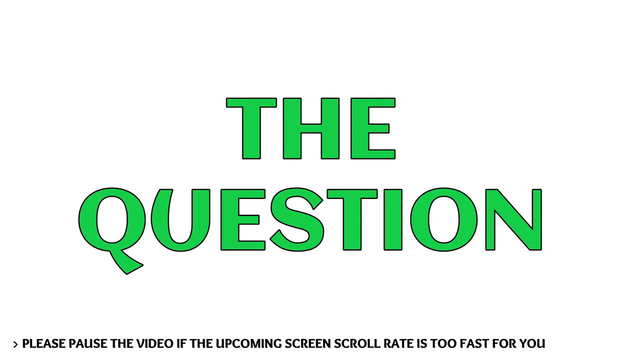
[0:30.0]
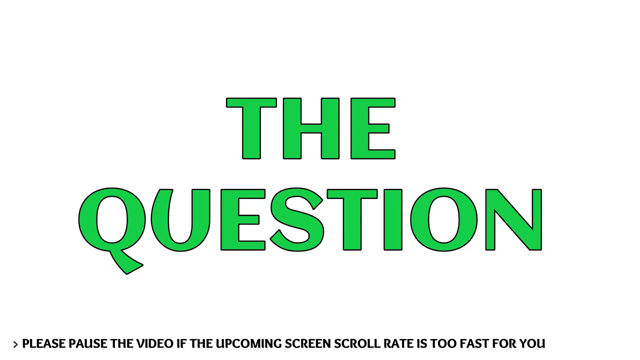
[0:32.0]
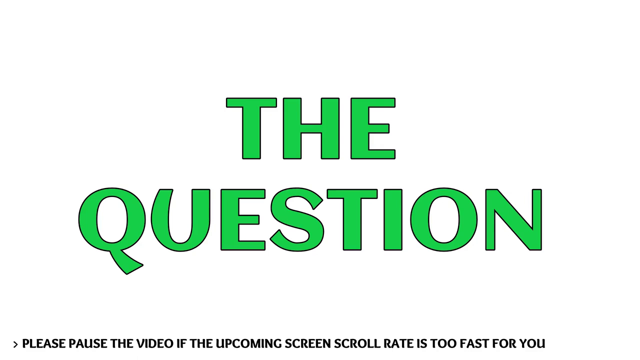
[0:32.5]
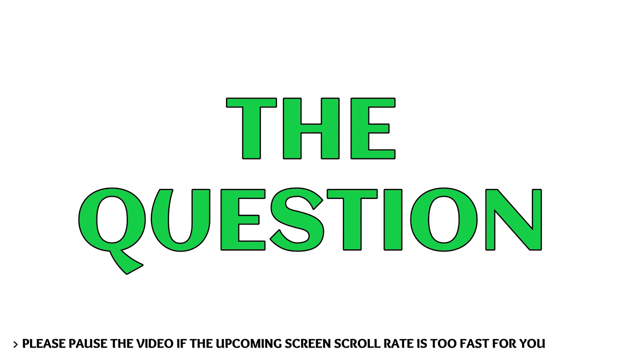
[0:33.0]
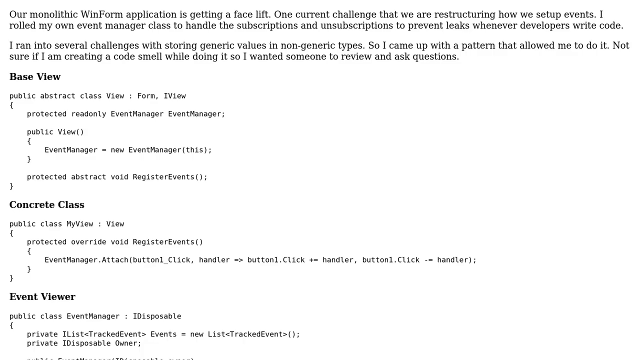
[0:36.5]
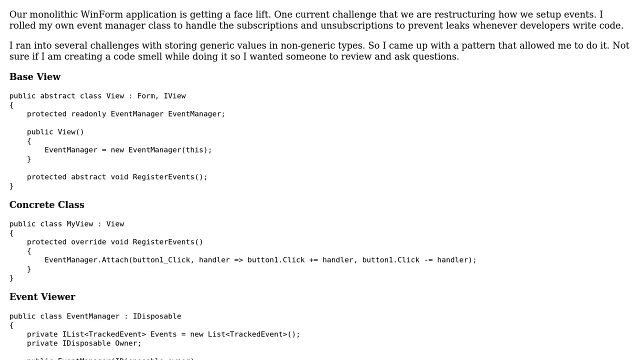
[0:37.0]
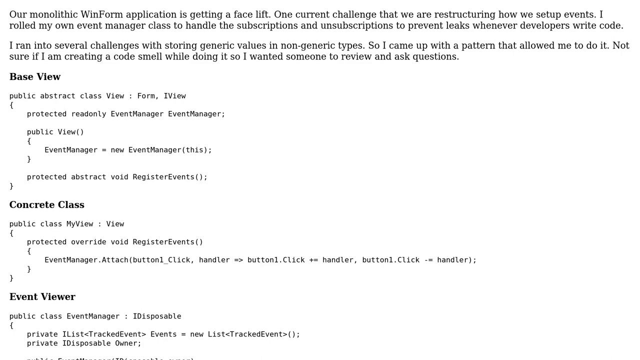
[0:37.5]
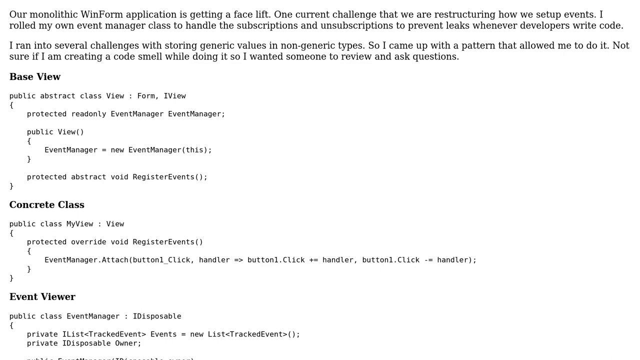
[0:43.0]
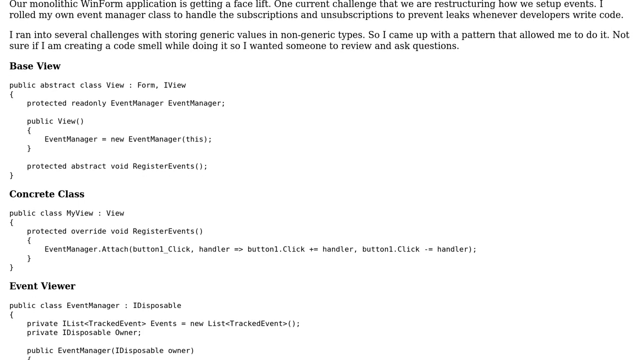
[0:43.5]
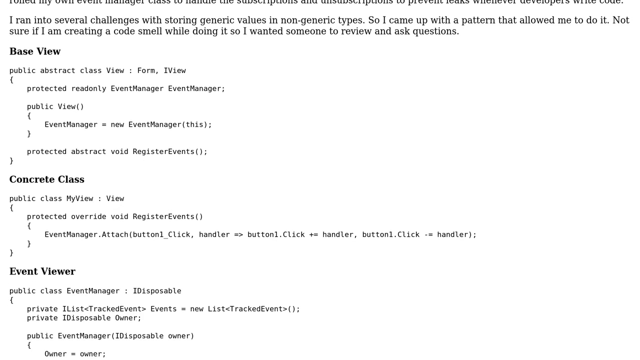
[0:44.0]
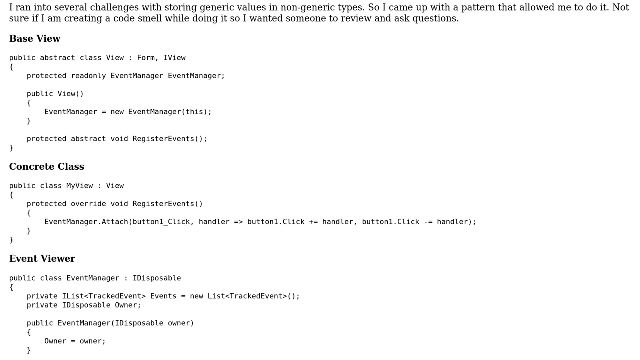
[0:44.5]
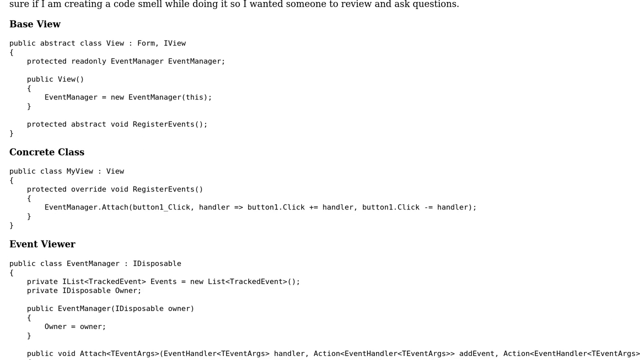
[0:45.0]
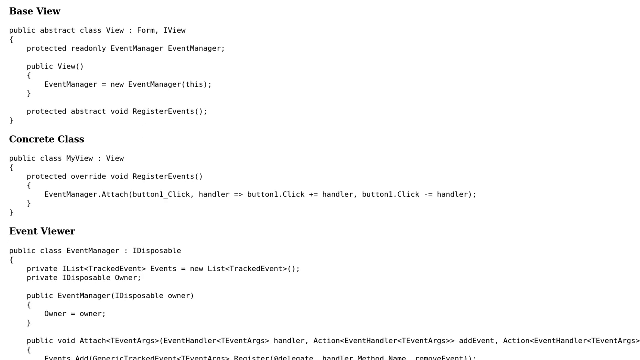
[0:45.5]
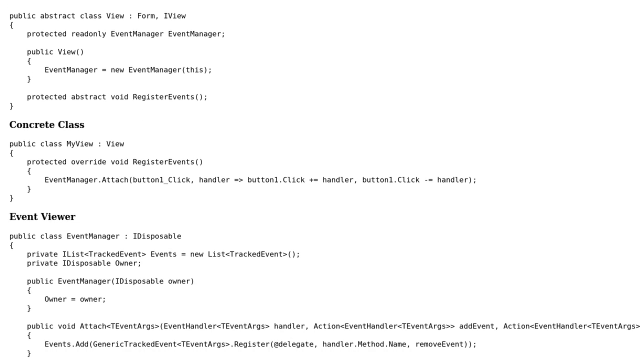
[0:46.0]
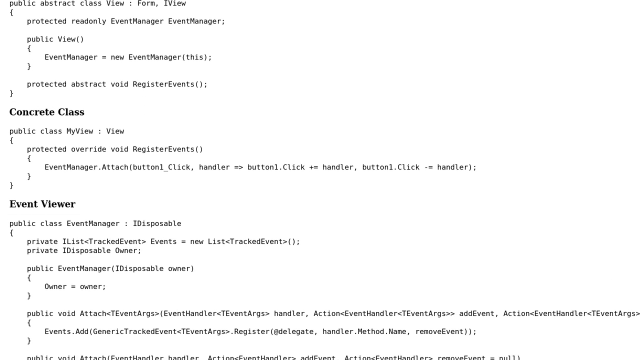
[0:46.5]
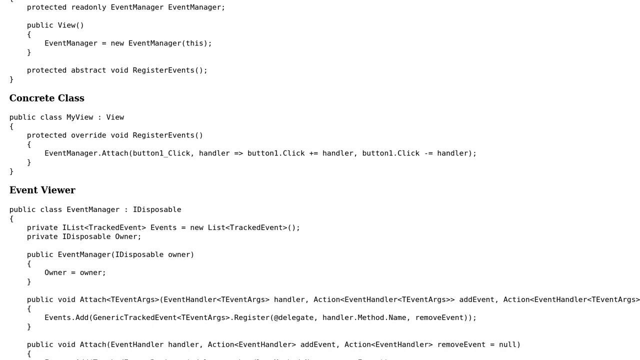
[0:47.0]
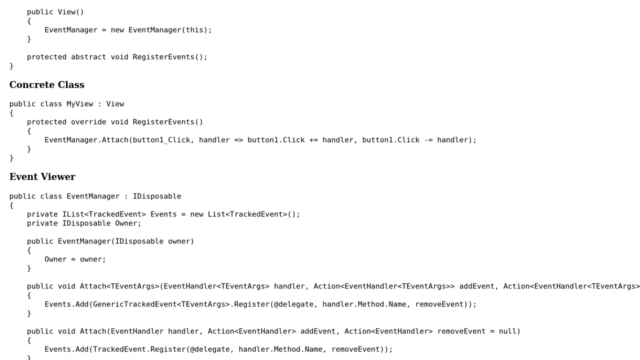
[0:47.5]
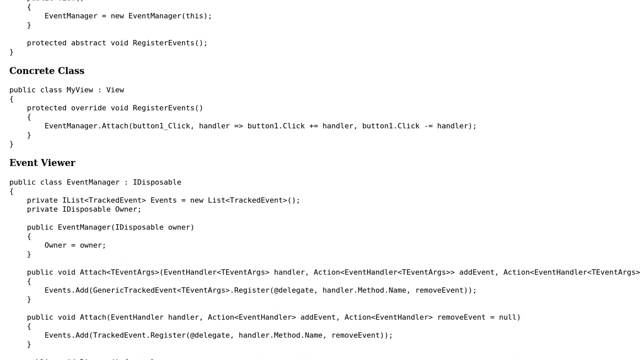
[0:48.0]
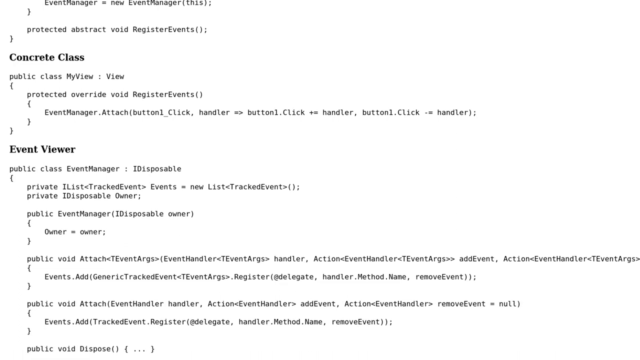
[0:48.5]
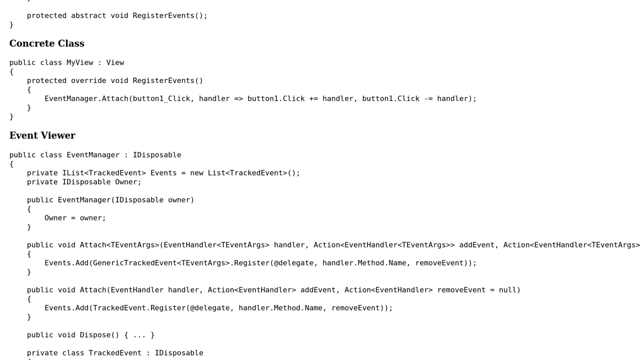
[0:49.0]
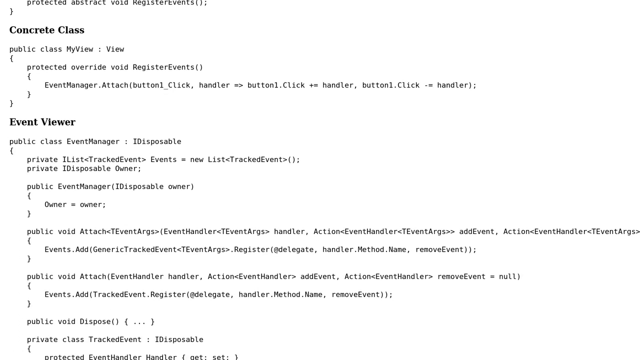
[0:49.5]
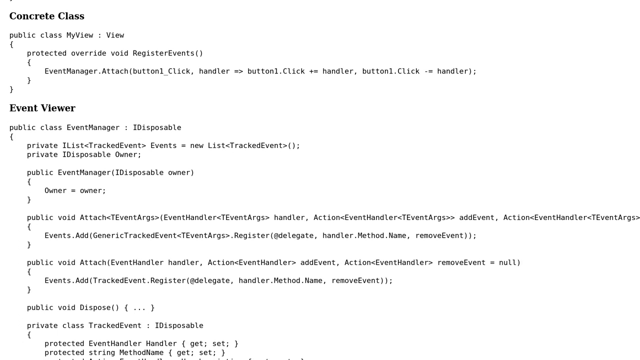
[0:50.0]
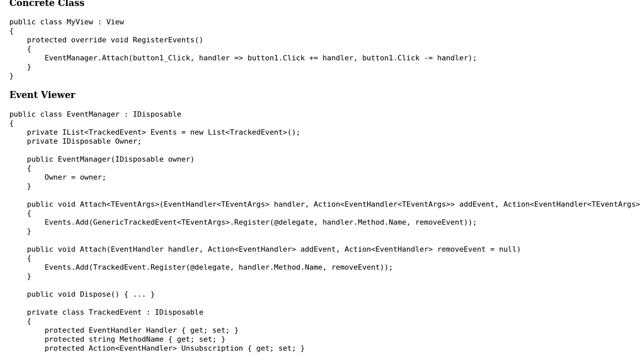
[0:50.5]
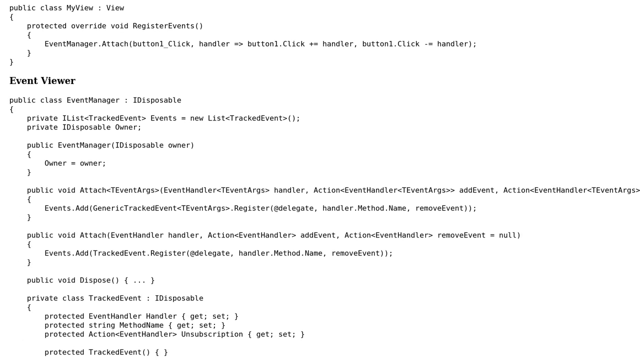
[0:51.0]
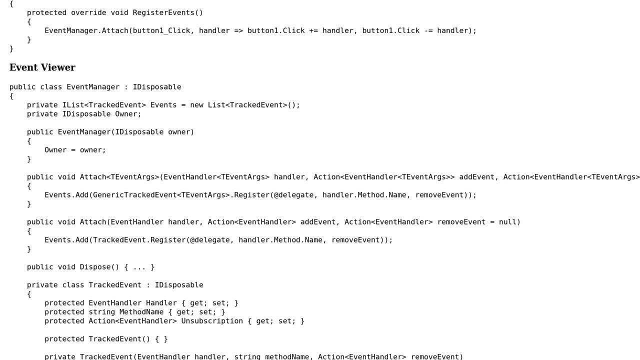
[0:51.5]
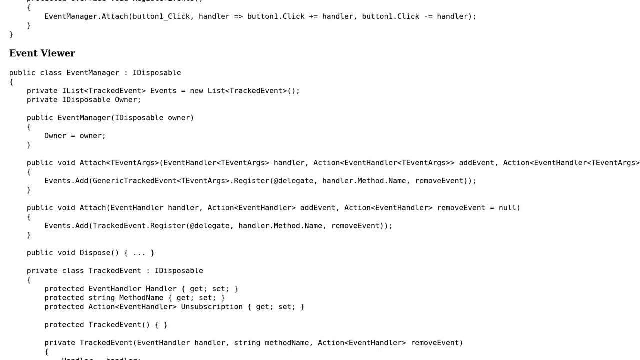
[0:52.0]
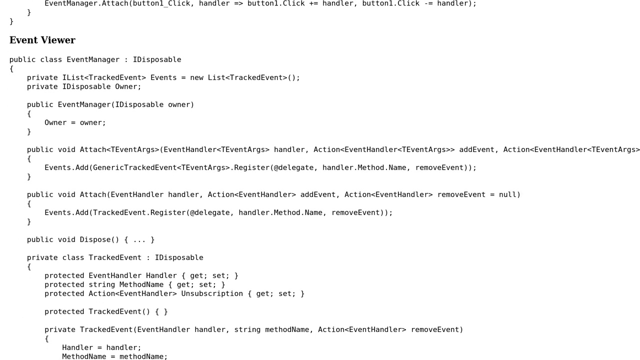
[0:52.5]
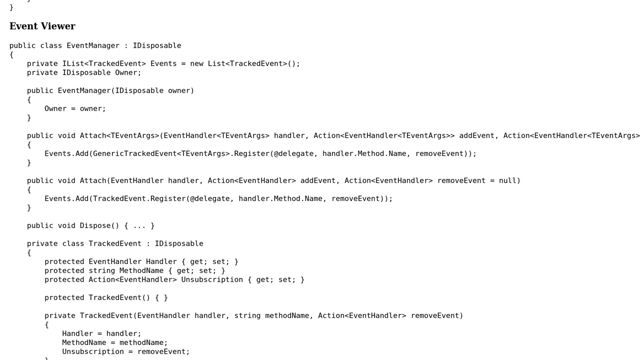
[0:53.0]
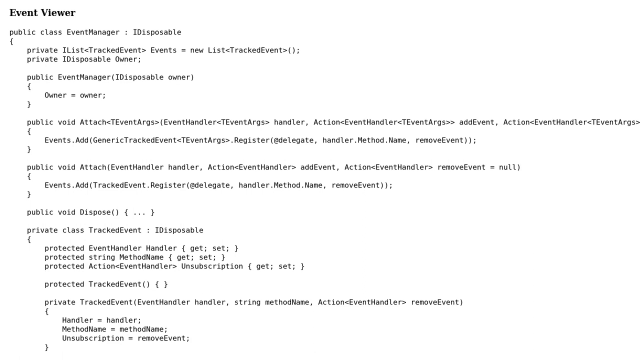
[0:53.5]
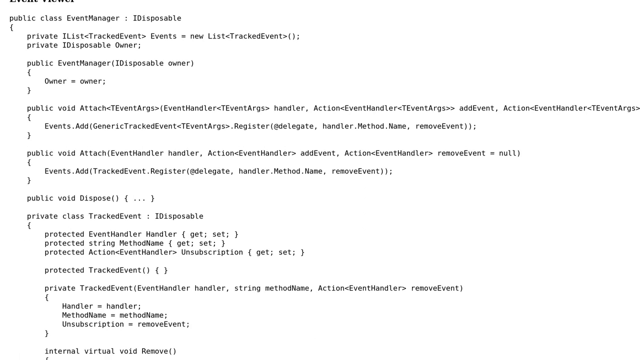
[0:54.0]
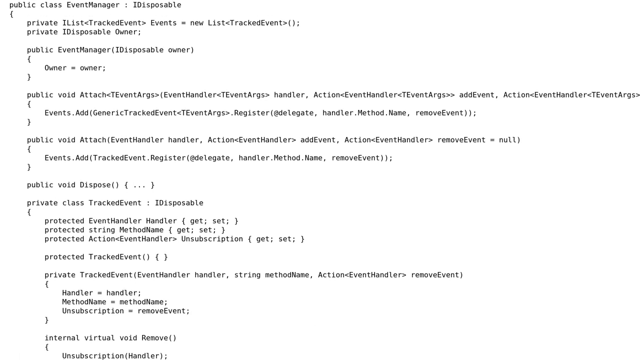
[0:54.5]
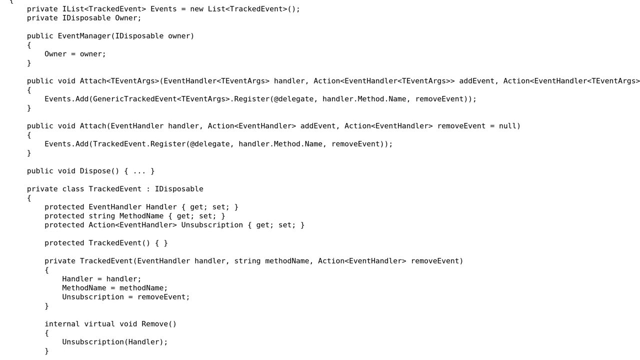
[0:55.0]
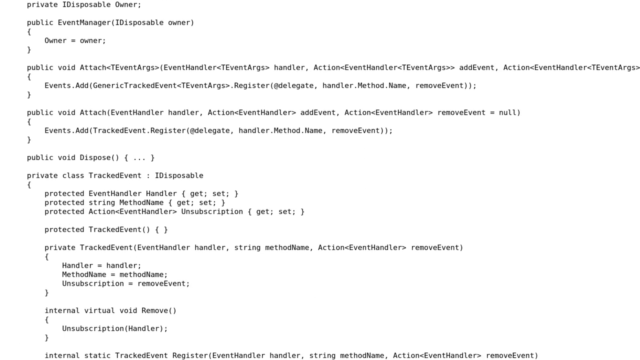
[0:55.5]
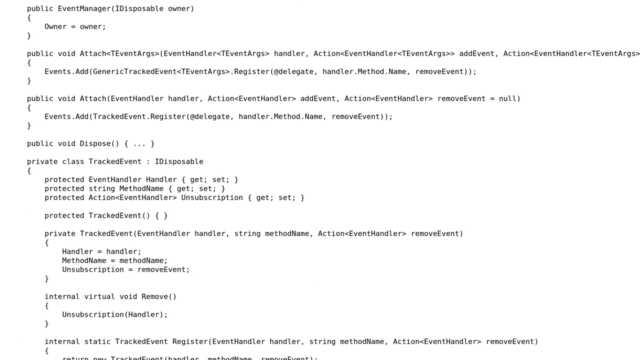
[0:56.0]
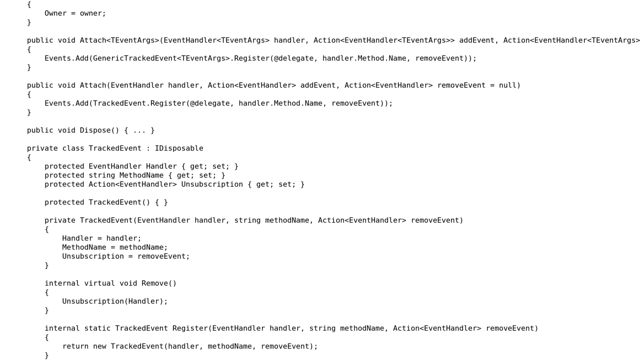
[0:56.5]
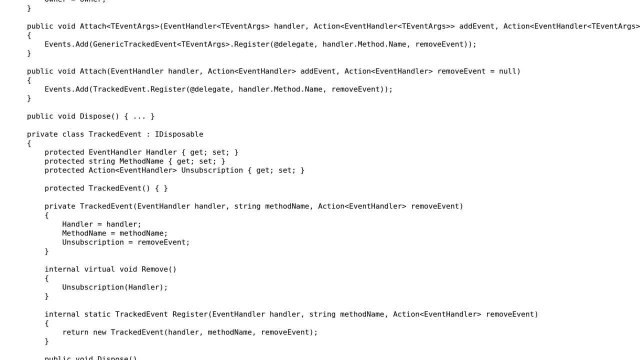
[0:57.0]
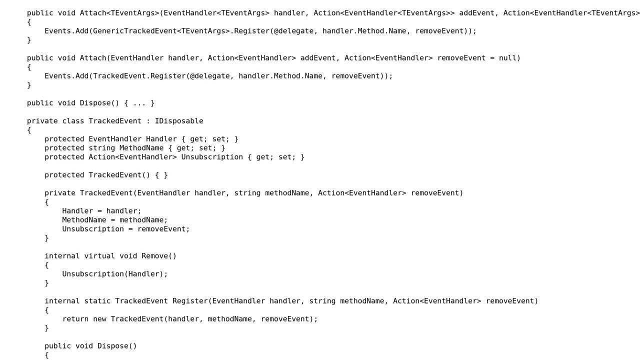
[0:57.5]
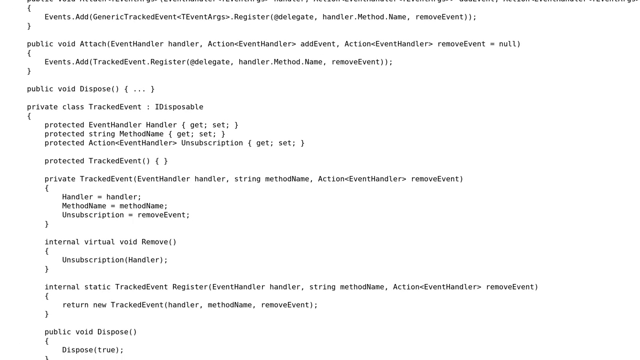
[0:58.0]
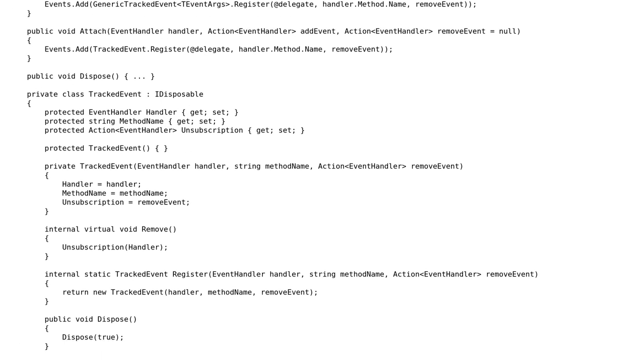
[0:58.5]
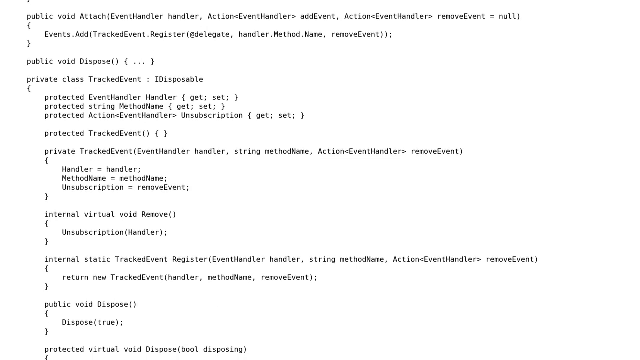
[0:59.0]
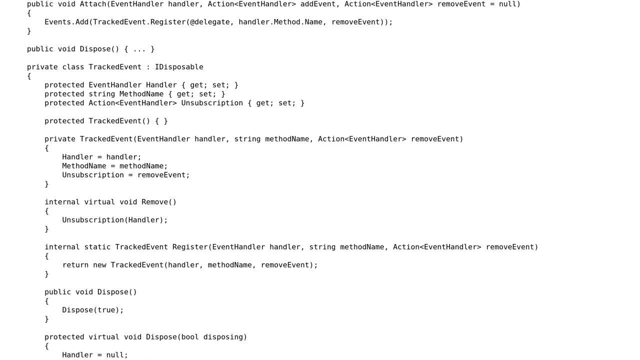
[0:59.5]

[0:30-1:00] A white screen shows lime green bubble letters in the middle that say "the question." It then pans to another white screen with black writing that begins "our monolithic WinForm application is getting a facelift" and continues "I rolled my own event manager class to handle the subscription and unsubscriptions to prevent leaks whenever developers write code. I ran into several challenges with storing generic values and non-generic types. So I came up with a pattern that allowed me to do it. Not sure if I'm creating a code smell while doing it, so I wanted someone to review and ask." Below that it says "base view" followed by some code, then "concrete class" with some code, then "event viewer" with some code. The page then sort of scrolls down to show more code. The writing is very tiny on the screen, probably about a size 10 font.